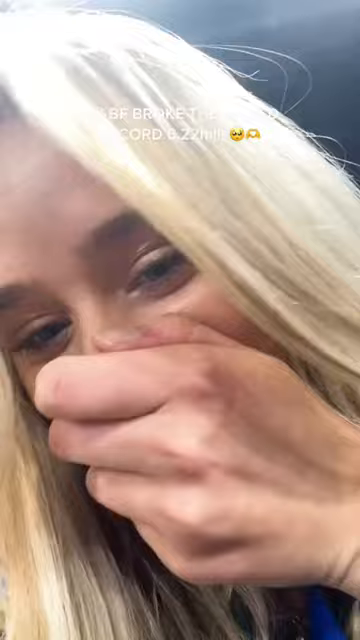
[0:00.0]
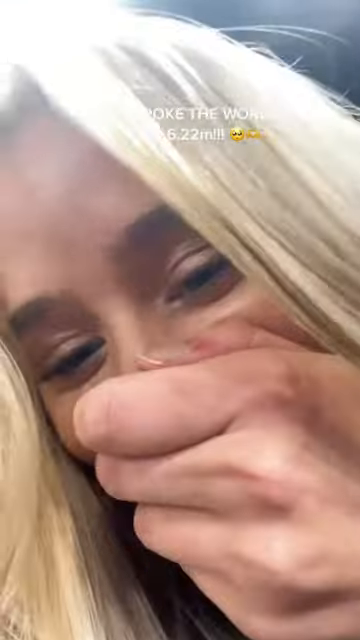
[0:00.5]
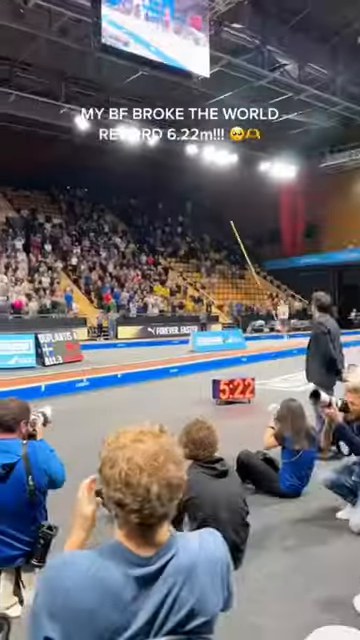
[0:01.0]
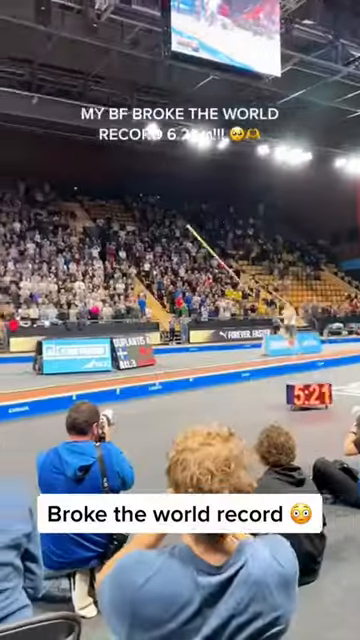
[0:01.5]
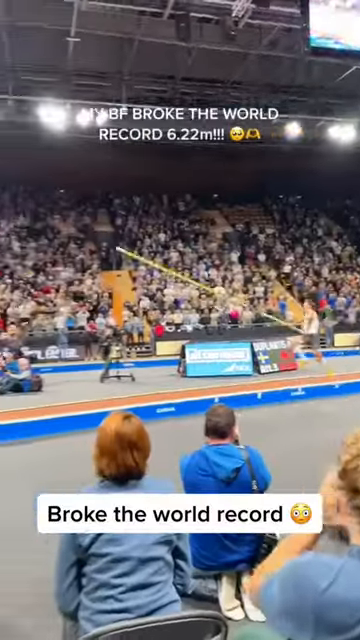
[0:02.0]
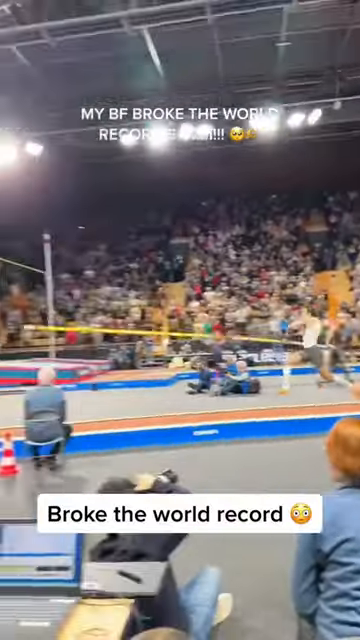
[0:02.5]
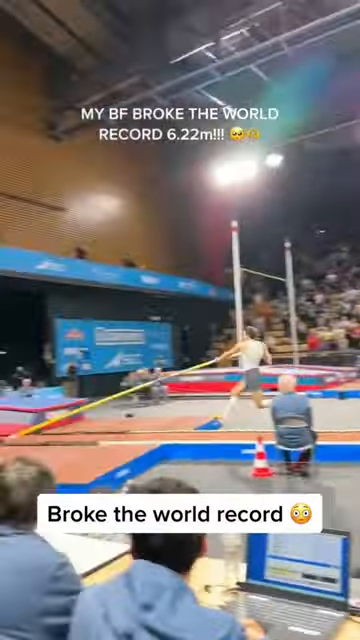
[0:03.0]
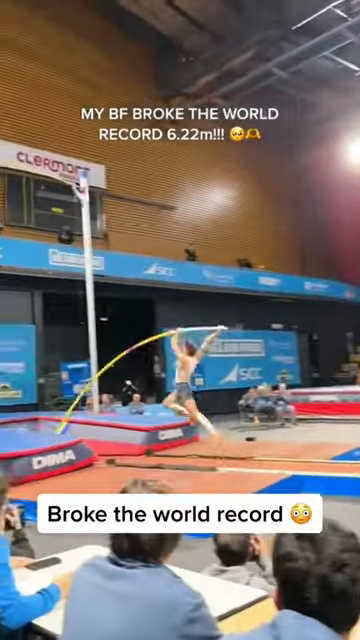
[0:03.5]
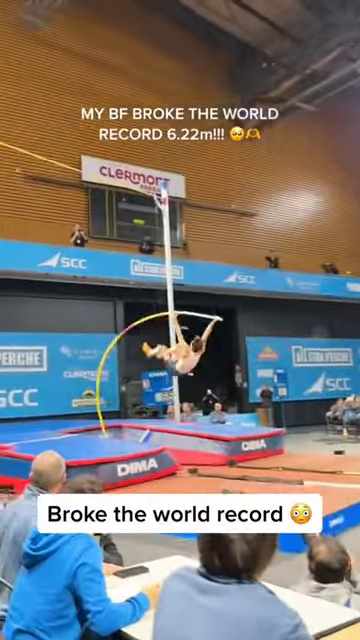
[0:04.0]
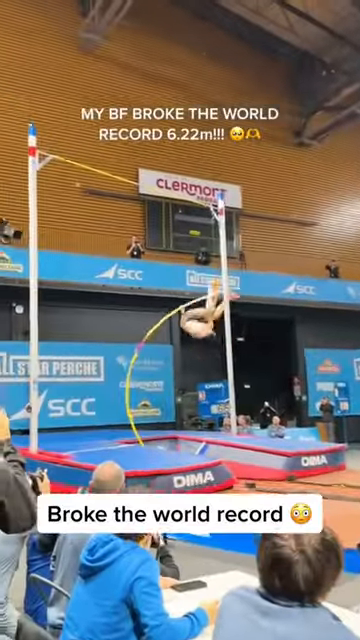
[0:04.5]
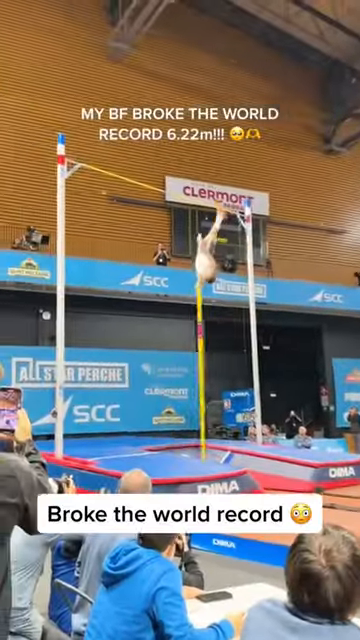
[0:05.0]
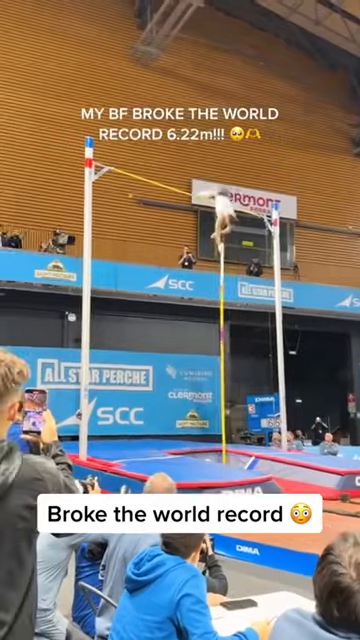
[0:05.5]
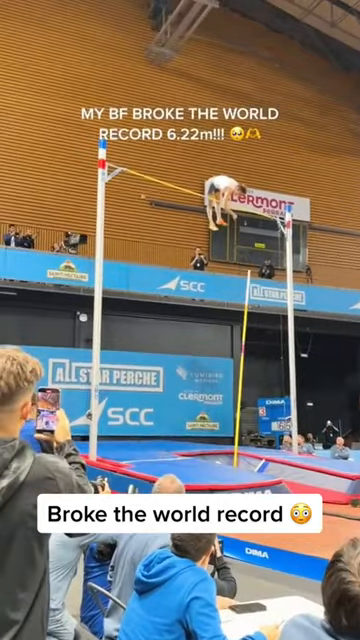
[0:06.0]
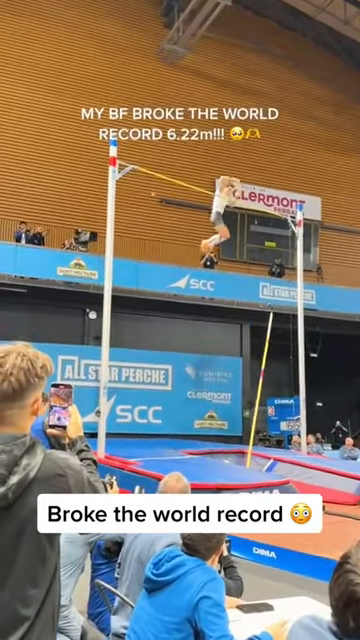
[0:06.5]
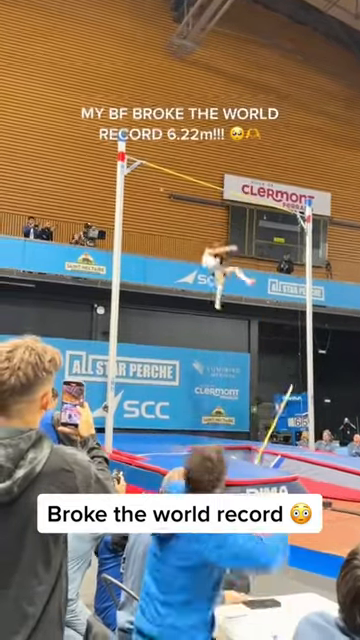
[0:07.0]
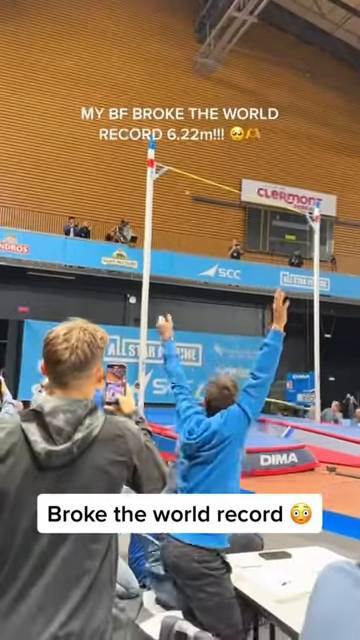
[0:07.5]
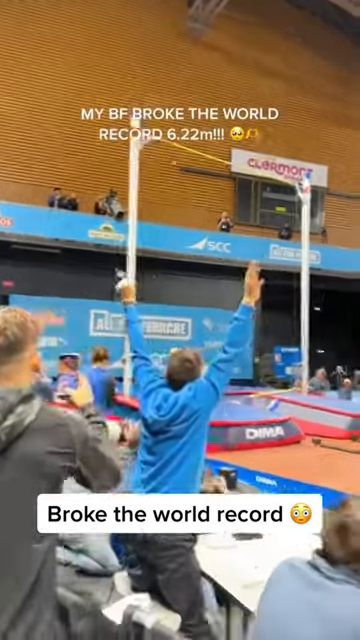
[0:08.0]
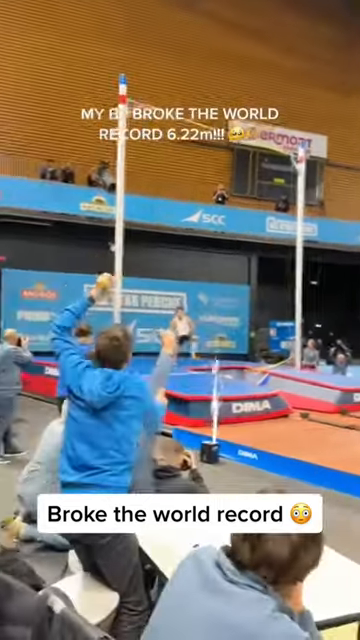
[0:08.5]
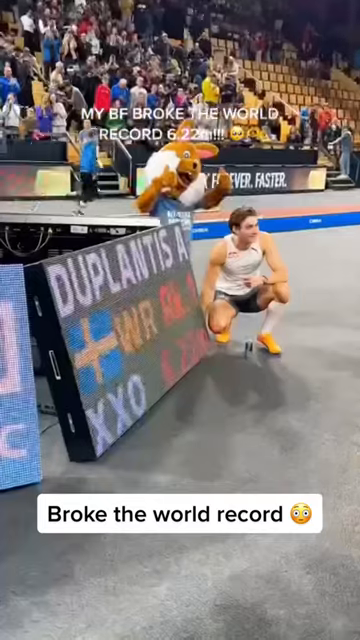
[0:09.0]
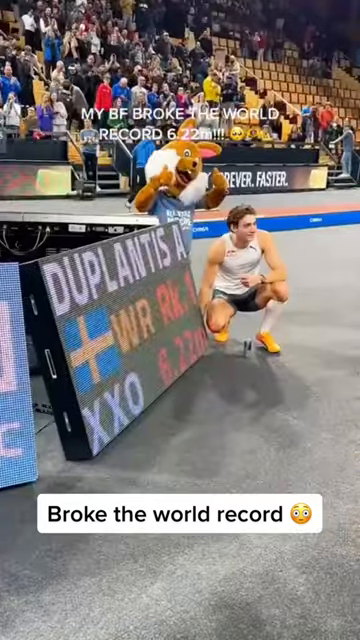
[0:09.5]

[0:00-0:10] A pole vaulter vaults up and over a pole inside an indoor gym. Text at the bottom of the screen reads "broke the world record," and text at the top reads "my BF broke the world record, 6.22 meters." The vaulter runs down the runway with the pole and, at the last second, buries the pole into the hole. The pole is yellow; it bends quite a bit and launches the vaulter into the air. The vaulter launches straight up and arcs his body to get over the top of the pole. At the end of the video, the pole vaulter kneels down in front of a sign that reads "Duplantis A," with the Norwegian flag and "WR" next to it, plus some other numbers and letters that are difficult to make out. The video then transitions to a woman holding her hand over her mouth and nose, as if she is too excited to talk and is trying to keep herself from bursting out.